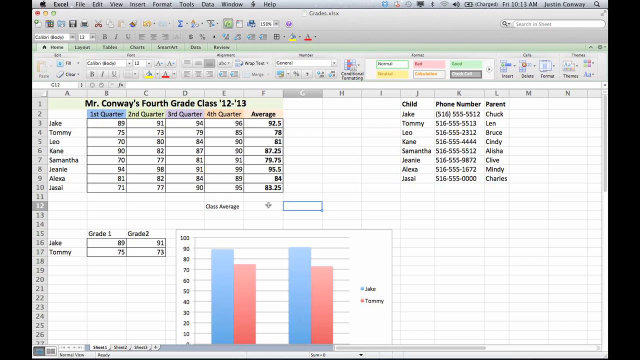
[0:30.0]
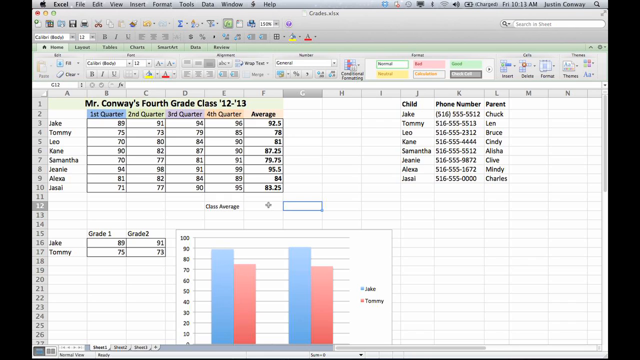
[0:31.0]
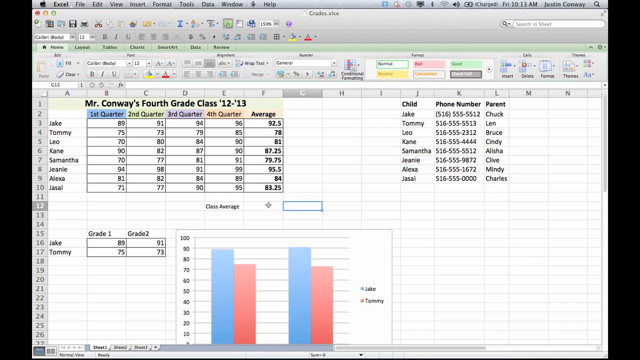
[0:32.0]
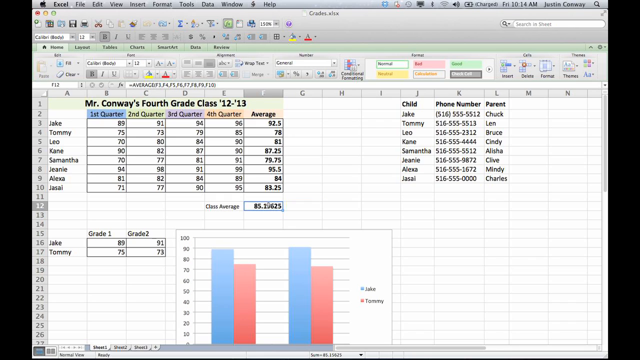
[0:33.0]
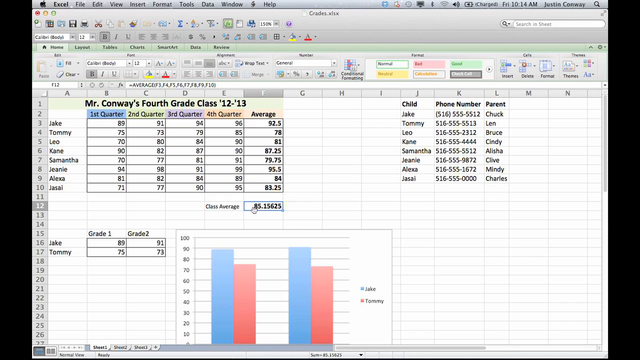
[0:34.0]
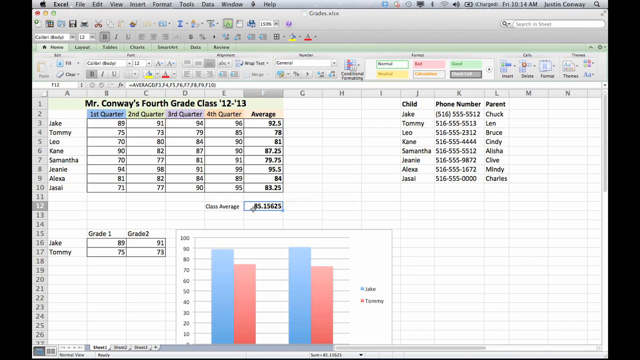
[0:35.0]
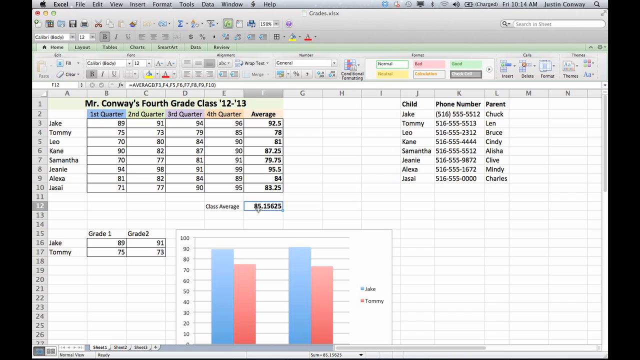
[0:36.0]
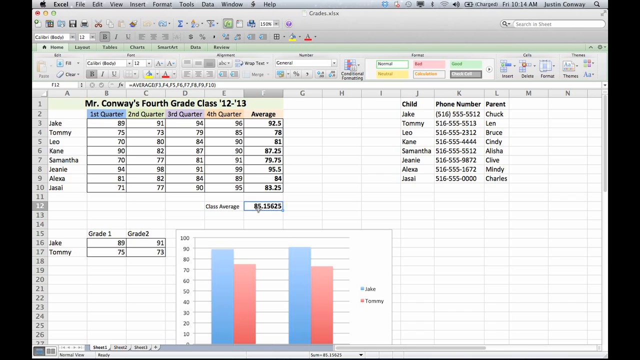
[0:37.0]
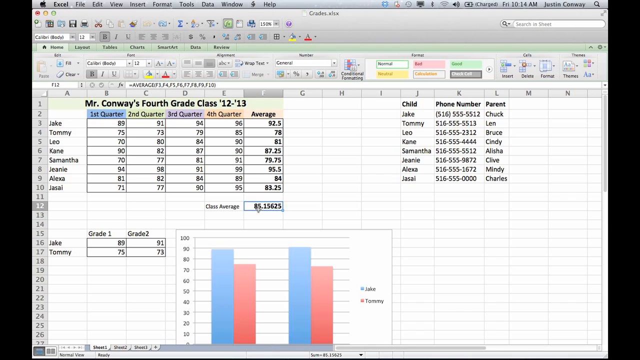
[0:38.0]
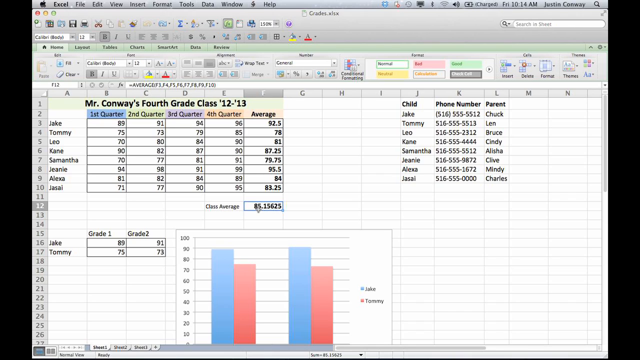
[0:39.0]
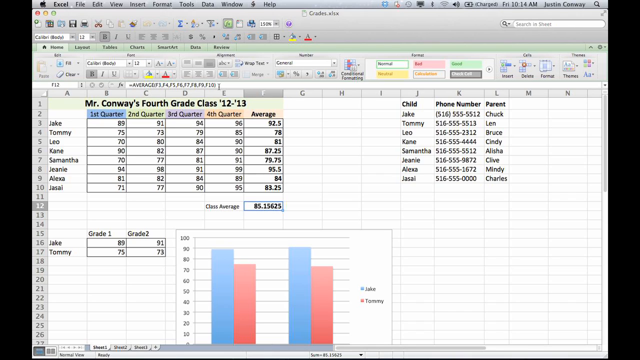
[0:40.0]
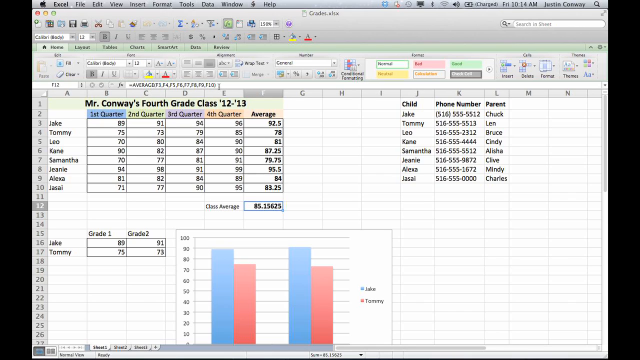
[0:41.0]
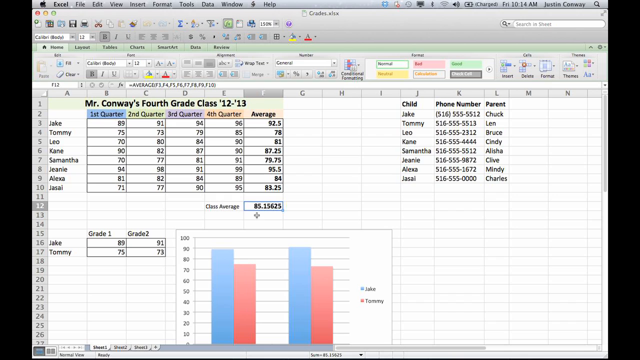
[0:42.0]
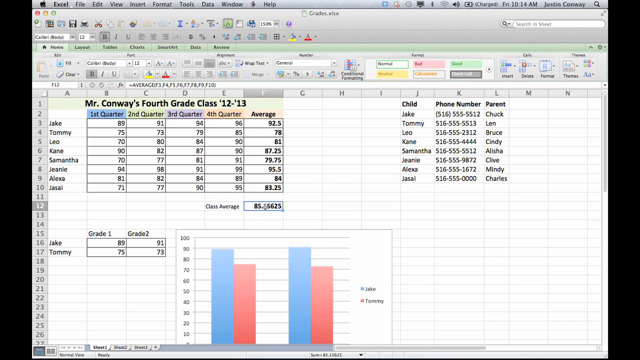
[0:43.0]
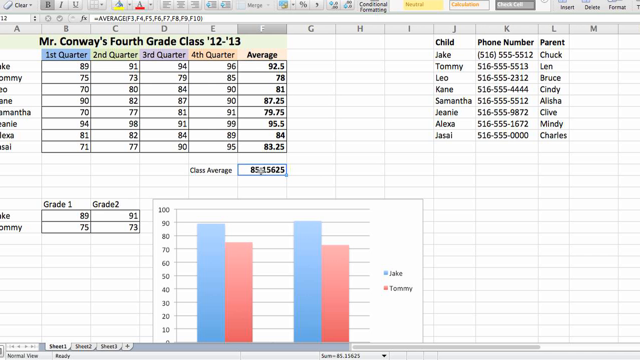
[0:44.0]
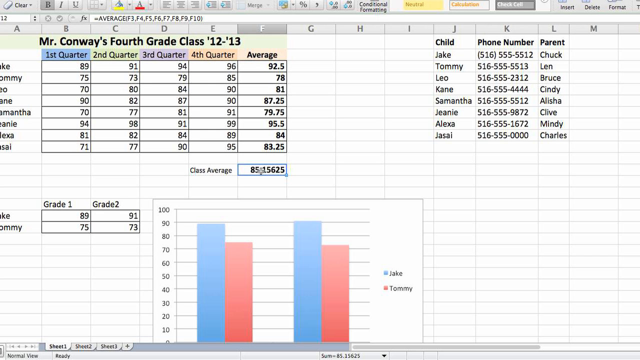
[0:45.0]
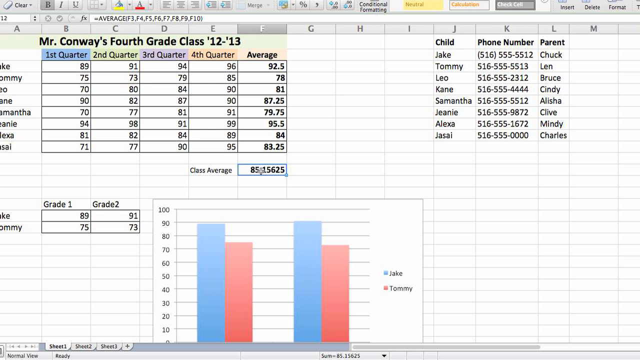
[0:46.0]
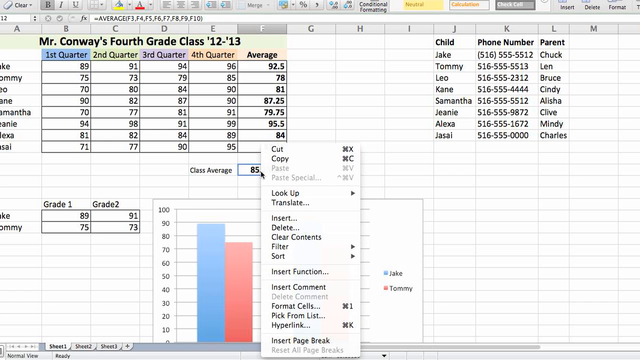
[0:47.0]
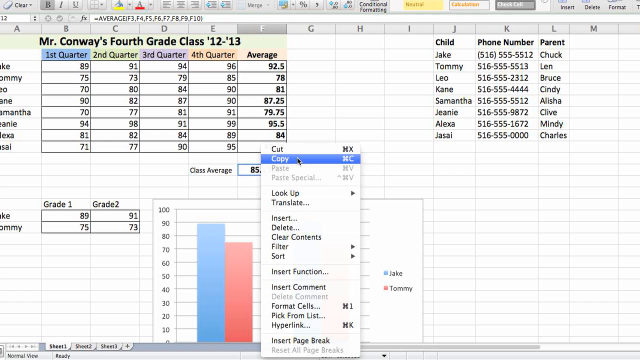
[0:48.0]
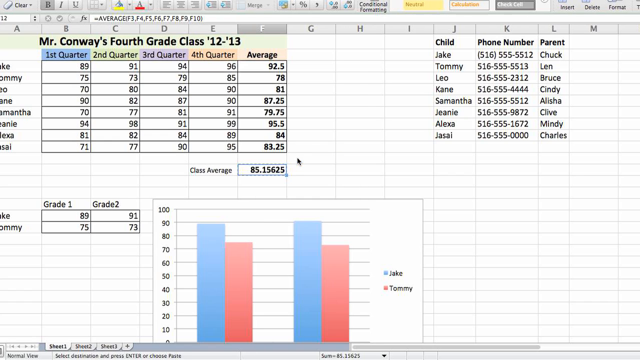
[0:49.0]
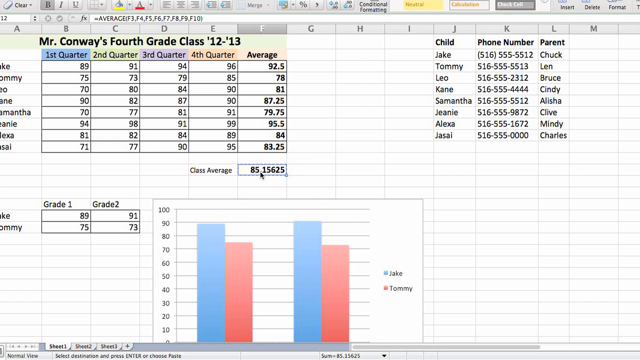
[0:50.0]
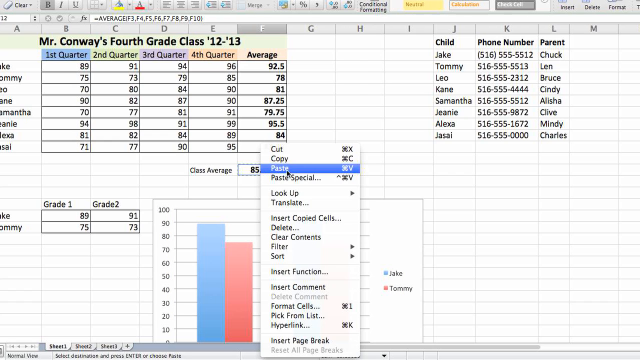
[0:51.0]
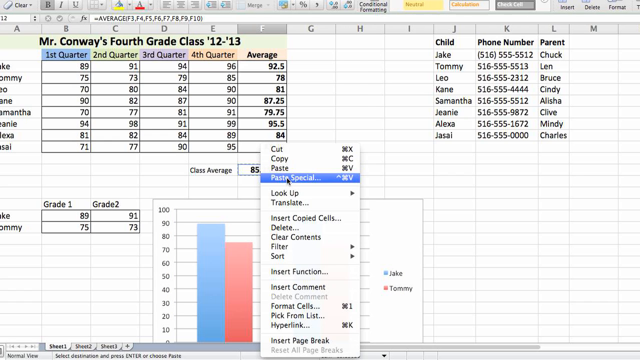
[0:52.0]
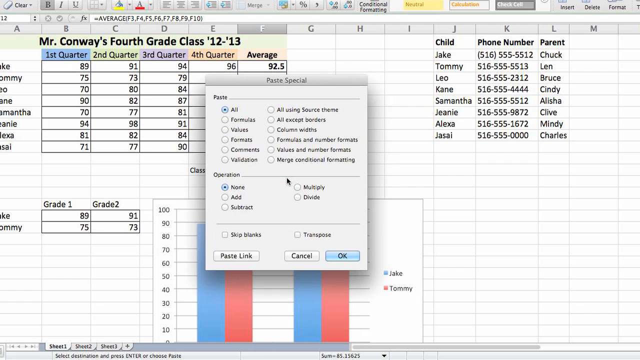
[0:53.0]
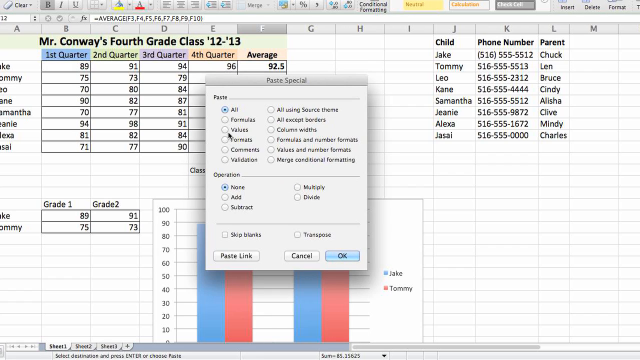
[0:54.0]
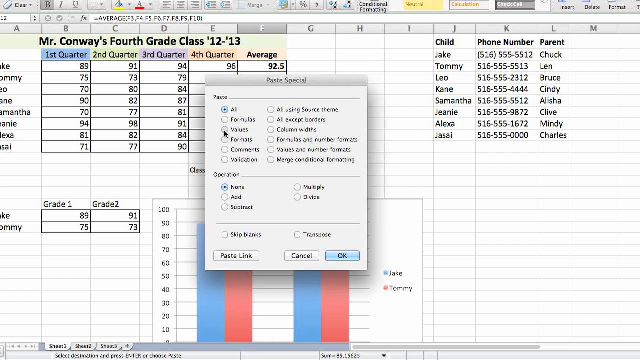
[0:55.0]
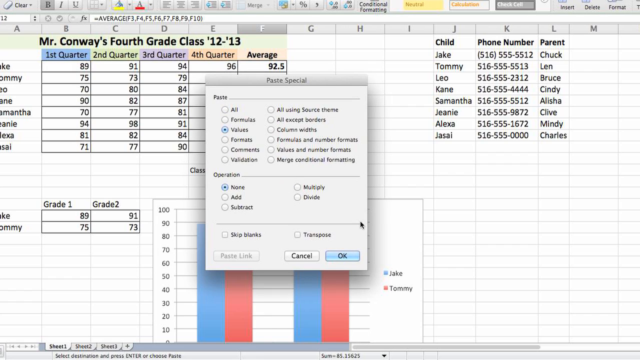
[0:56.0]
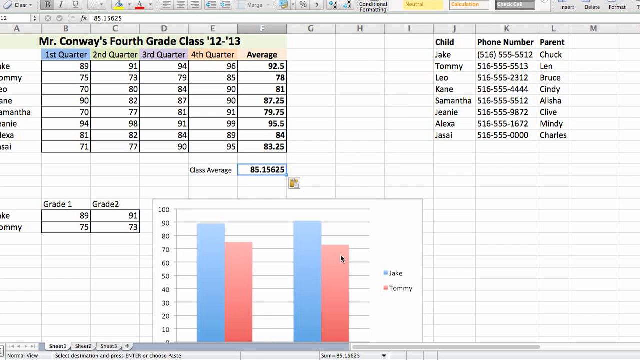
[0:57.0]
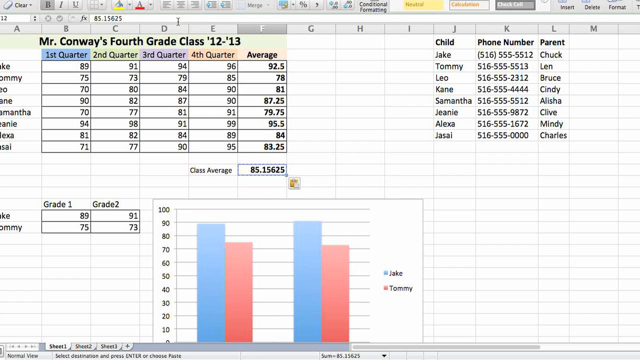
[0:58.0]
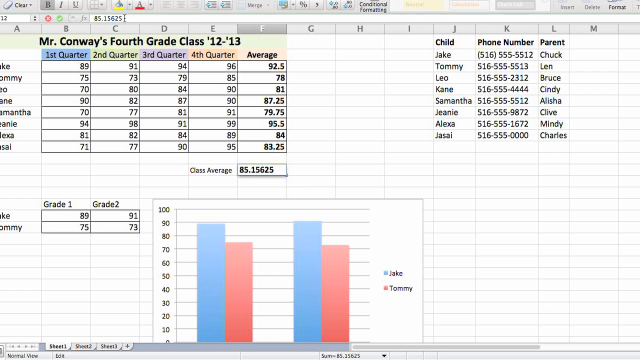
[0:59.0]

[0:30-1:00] The numbers in the table differ from one another. The graph is divided into two colors, blue and red, and its numbers represent grade one and grade two. A mouse cursor moves around the screen, apparently as if to add lines to the table.